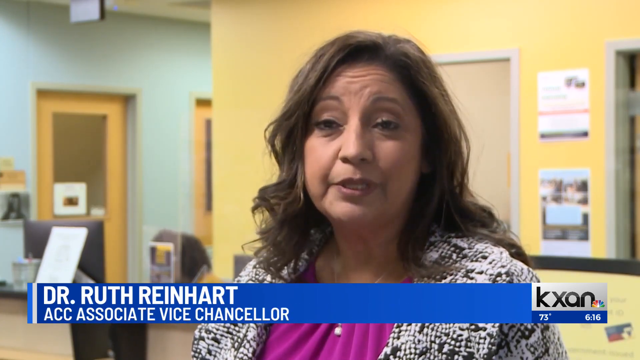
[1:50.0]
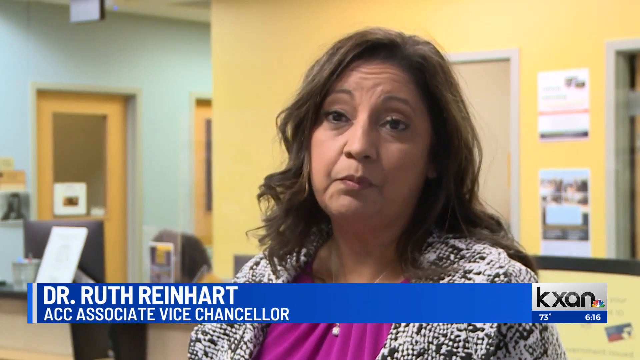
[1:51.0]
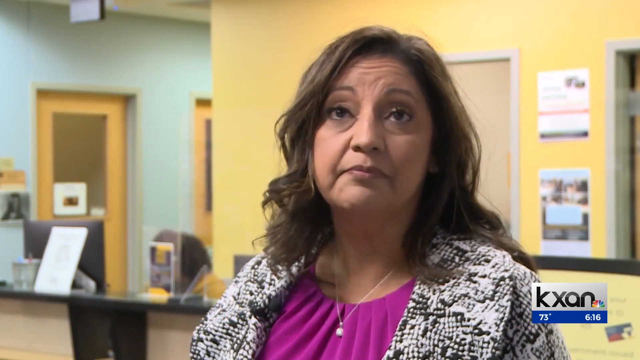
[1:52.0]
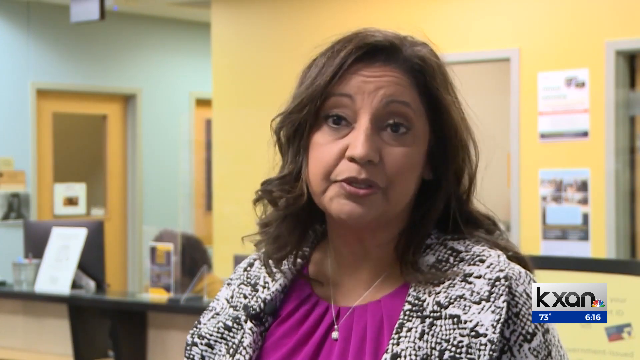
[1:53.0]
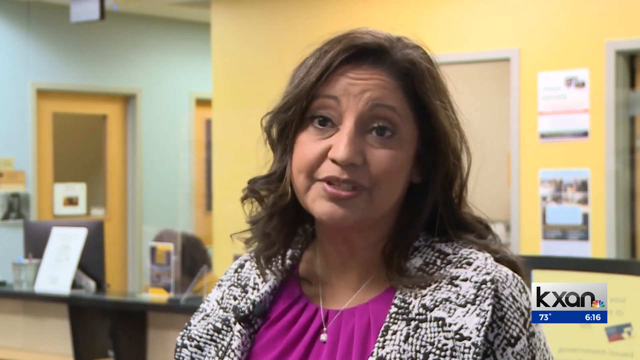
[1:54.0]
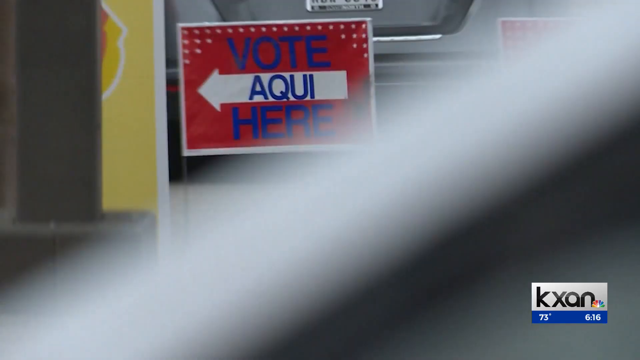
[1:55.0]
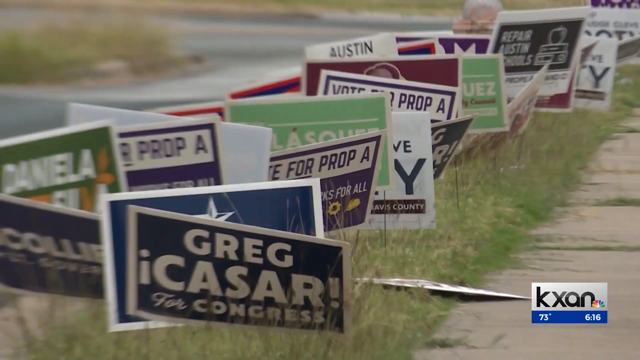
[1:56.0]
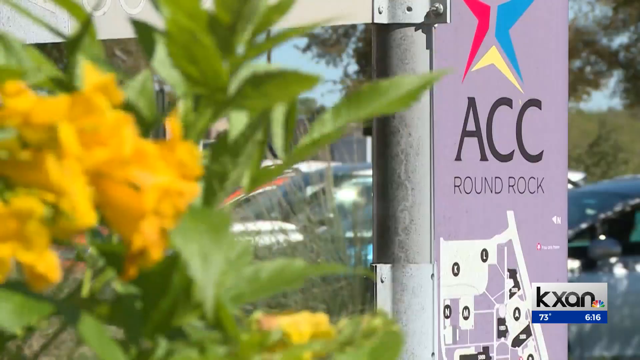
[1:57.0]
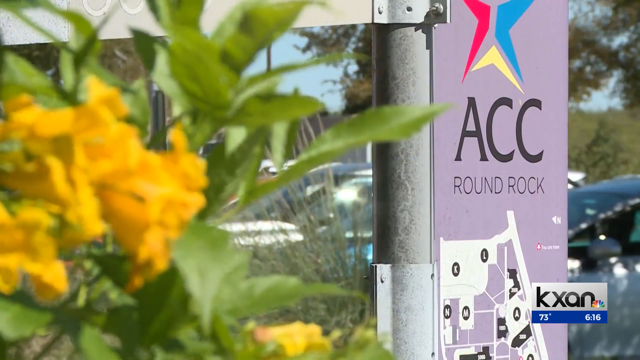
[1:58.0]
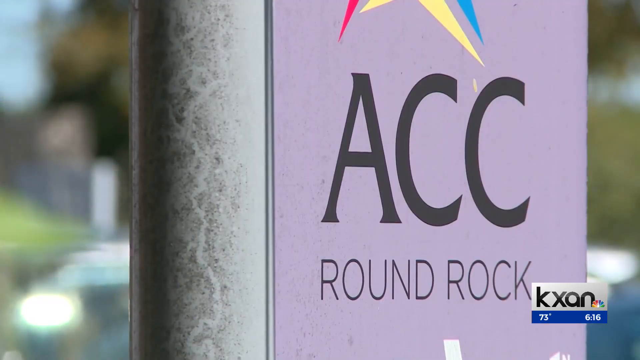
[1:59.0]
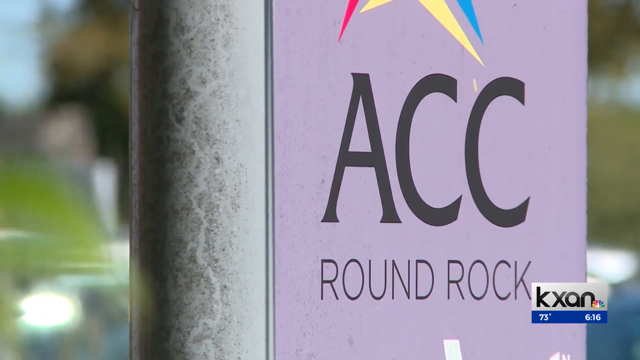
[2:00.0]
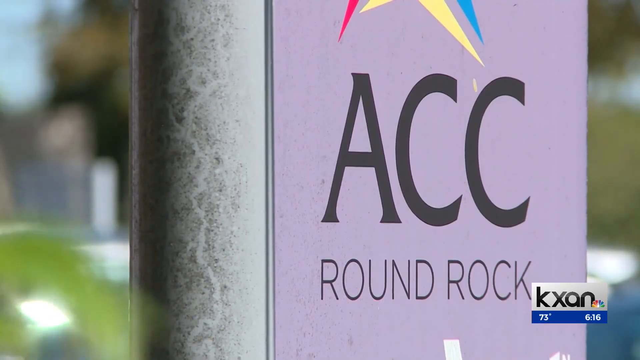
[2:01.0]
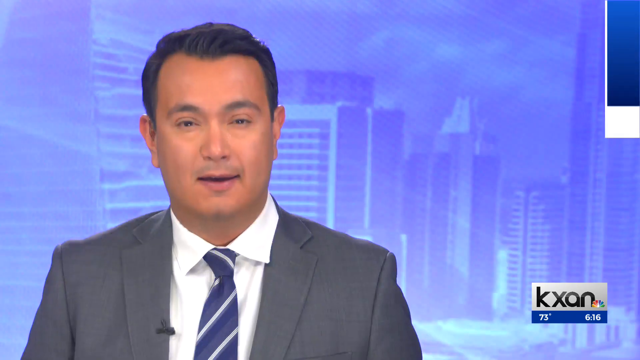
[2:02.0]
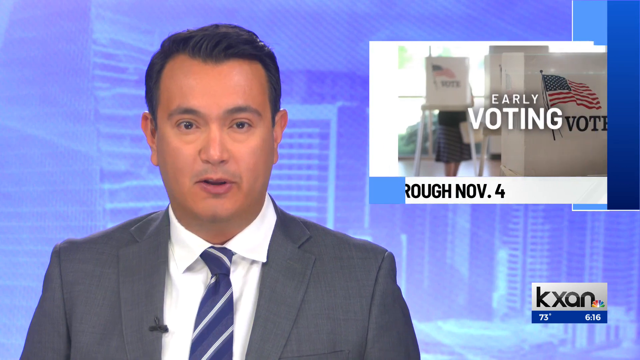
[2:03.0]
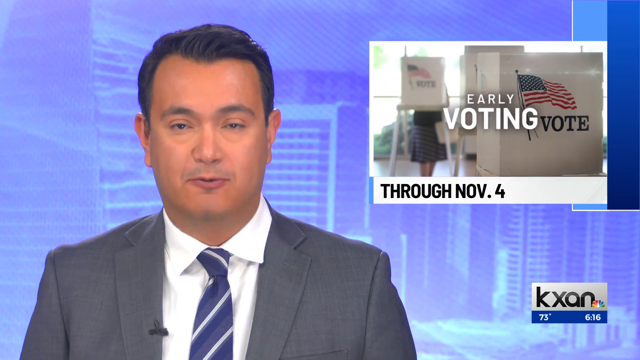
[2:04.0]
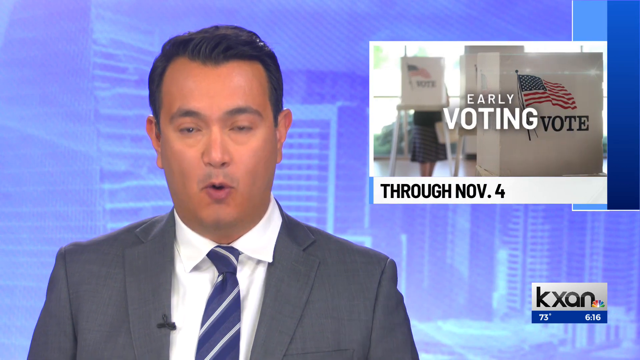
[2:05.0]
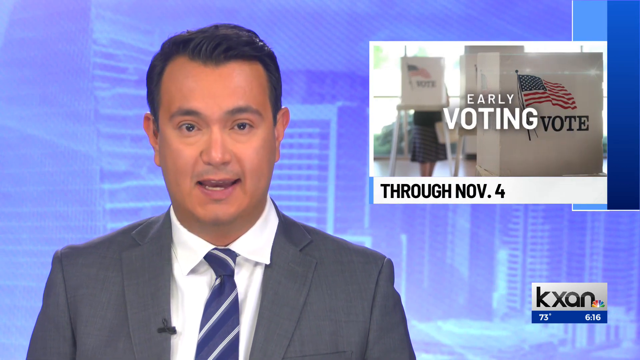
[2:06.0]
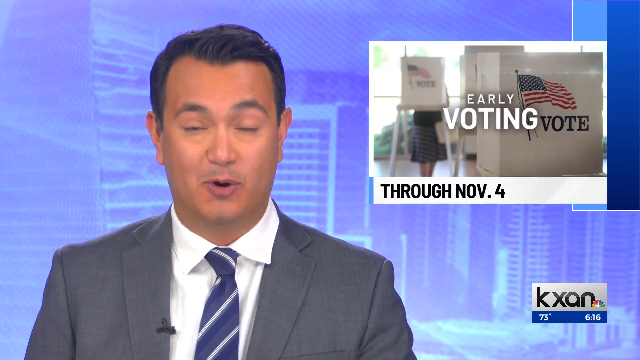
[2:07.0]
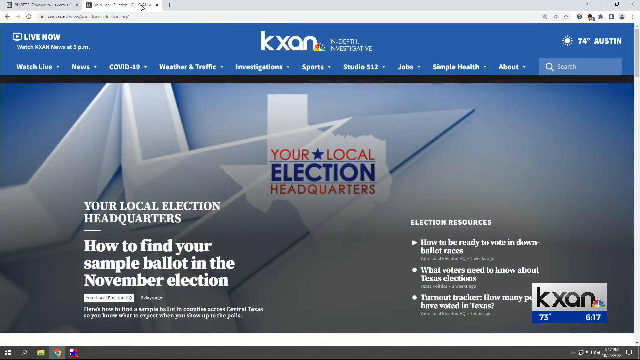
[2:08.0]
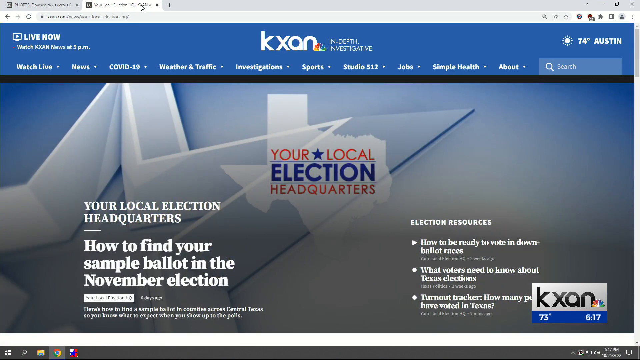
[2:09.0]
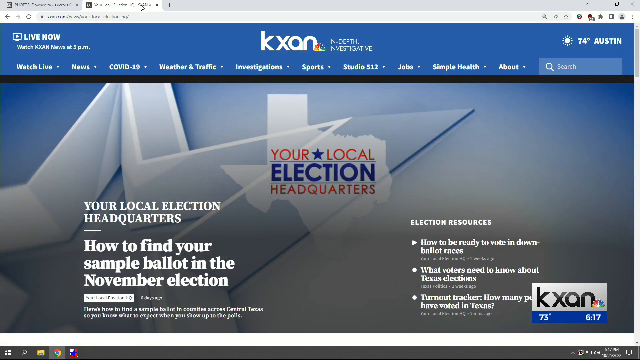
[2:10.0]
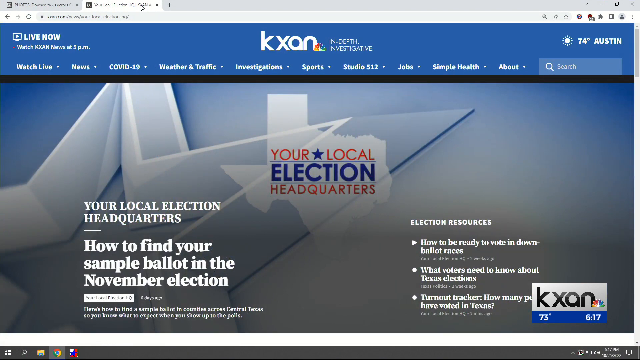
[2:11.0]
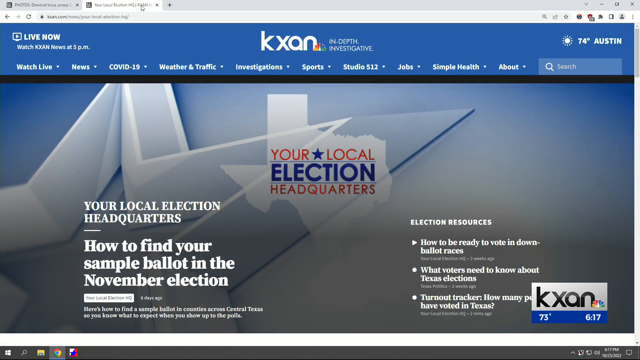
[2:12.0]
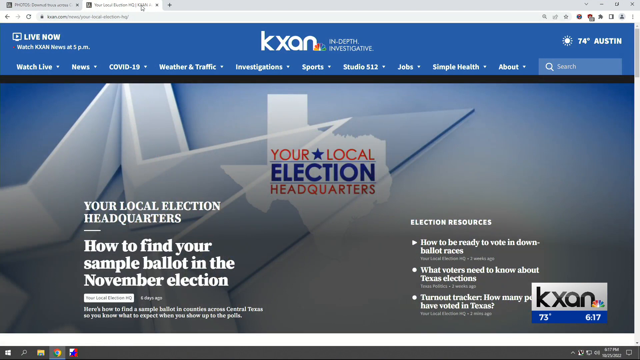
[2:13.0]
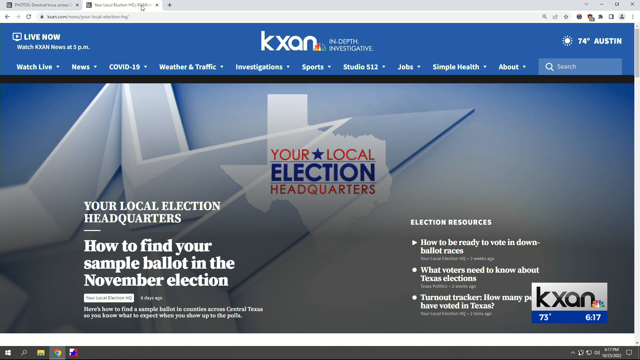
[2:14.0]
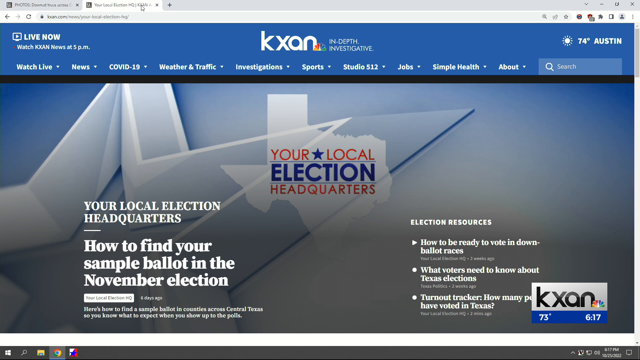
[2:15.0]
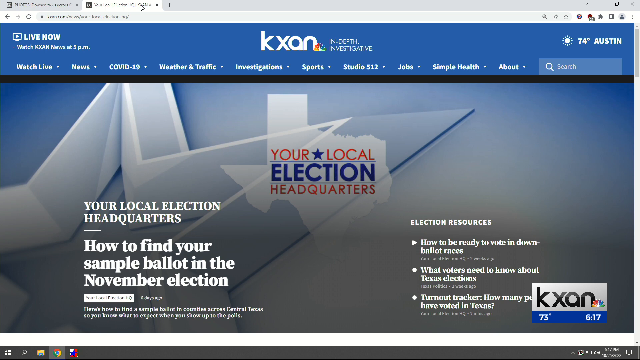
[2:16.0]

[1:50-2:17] The scene starts in what looks to be an administrative office with yellow walls and one green wall; it is a light, airy room with moderate lighting. A very tight shot focuses on a woman, showing roughly her head and shoulders as she stands in the office. Several quick outdoor shots follow. One focuses on a red sign with blue letters reading "vote here," with an arrow between "vote" and "here," the Spanish word "aqui," pointing to the left. Next is a grassy area with several voting signs pinned down, maybe about 20 of them; one is for "Cesar for Congress" and one says "vote for Prop A." One has fallen over. Then a tight shot shows an ACC Round Rock sign, with yellow flowers on a bush out of focus on the left; the sign is in a parking lot where several cars are parked. In each of these scenes, the KXAN call letters with the peacock logo are at the right, with the time, temperature and date at the bottom of the call sign. A closer shot then focuses on the sign that says "ACC Round Rock." The scene returns indoors to the newsroom, focusing on the male newscaster talking to the camera. Above his shoulder is a video that says "early voting" and "through Nov. 4," showing voting booths with "vote" and the American flag on them. One woman is voting; she cannot be seen because she is in the voting booth, which sits on a table and is not fully covered, so only her lower body is visible while her face is in the booth. Next is the KXAN website, showing "your local election headquarters" and instructions on how to find your sample ballot in the November election.